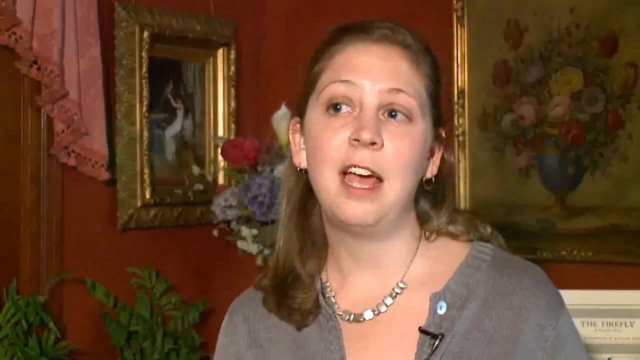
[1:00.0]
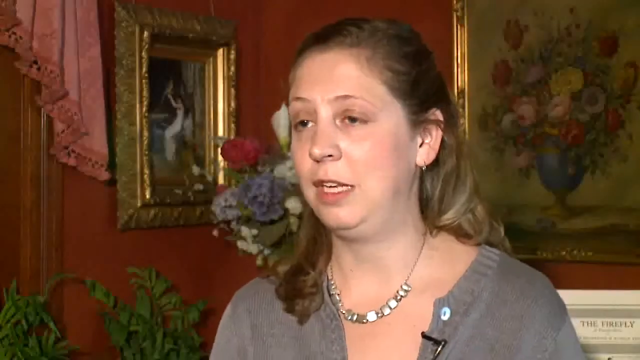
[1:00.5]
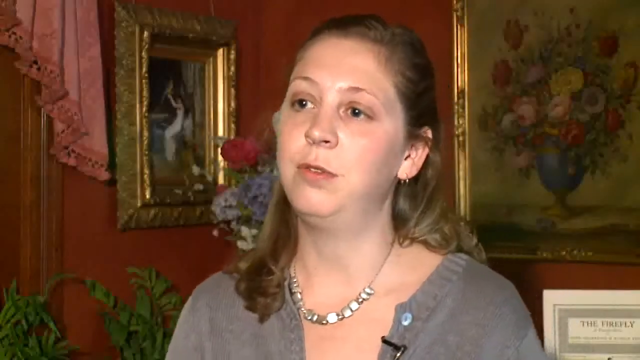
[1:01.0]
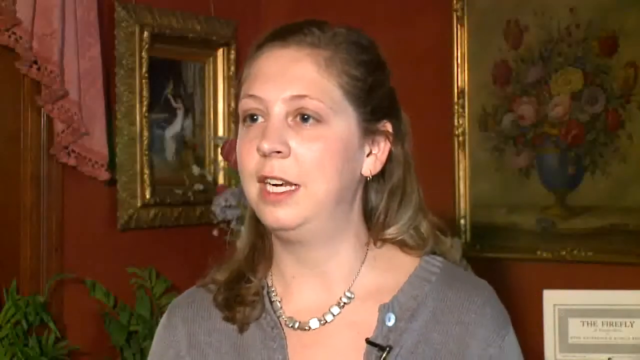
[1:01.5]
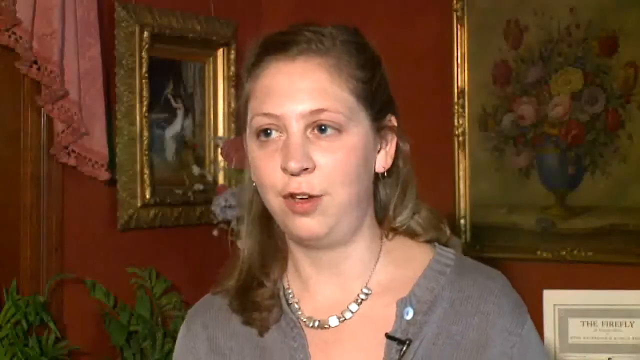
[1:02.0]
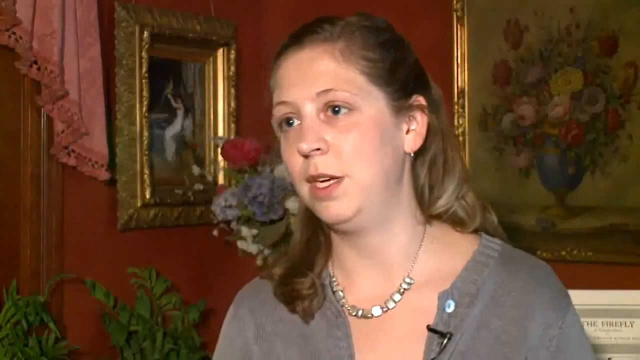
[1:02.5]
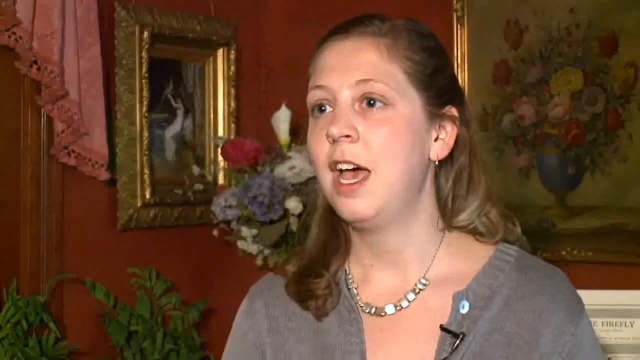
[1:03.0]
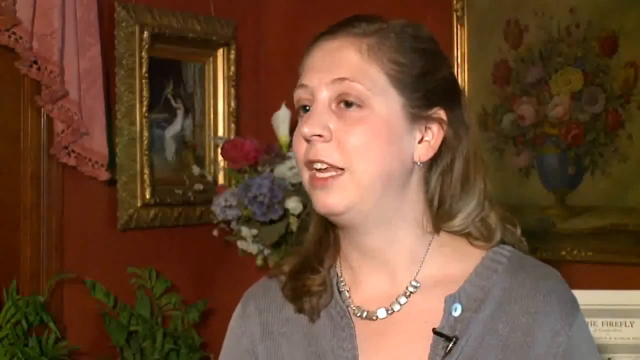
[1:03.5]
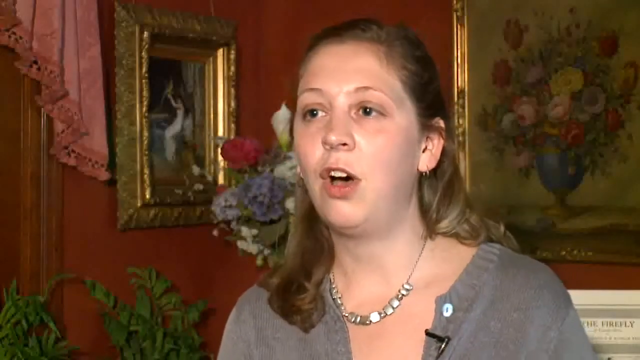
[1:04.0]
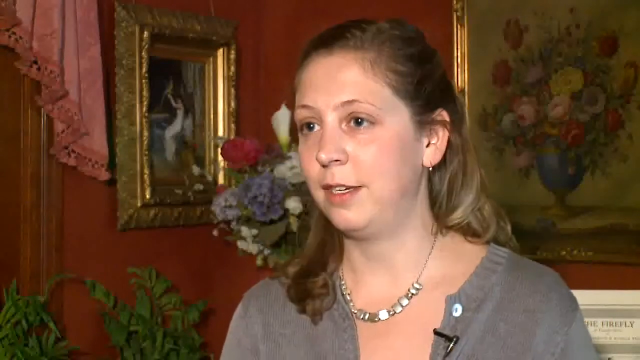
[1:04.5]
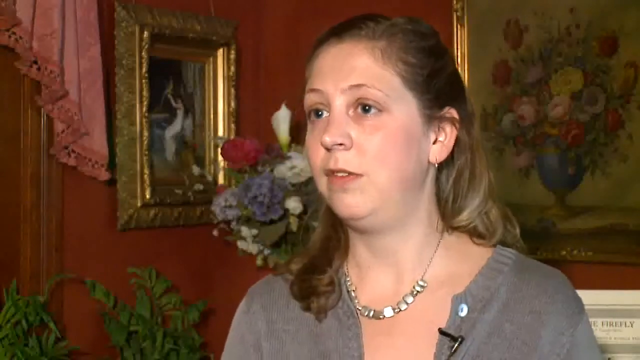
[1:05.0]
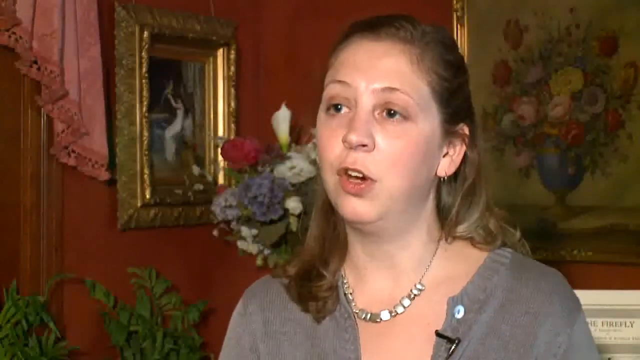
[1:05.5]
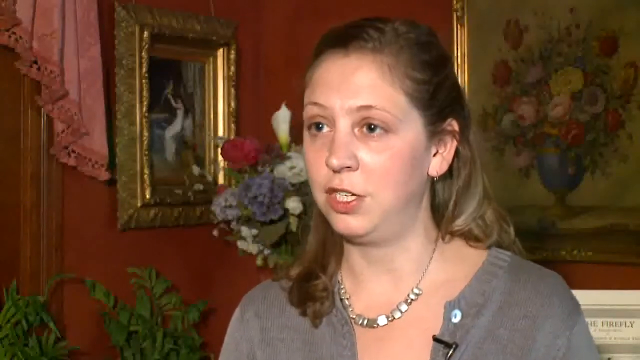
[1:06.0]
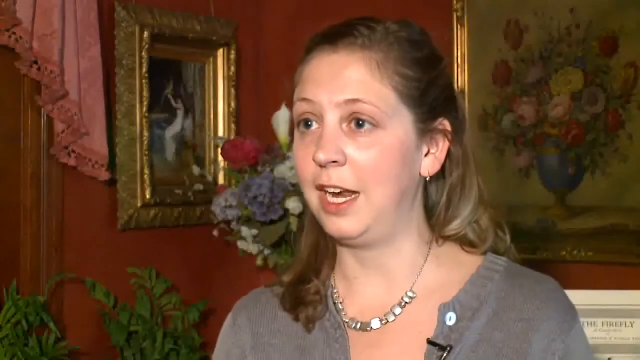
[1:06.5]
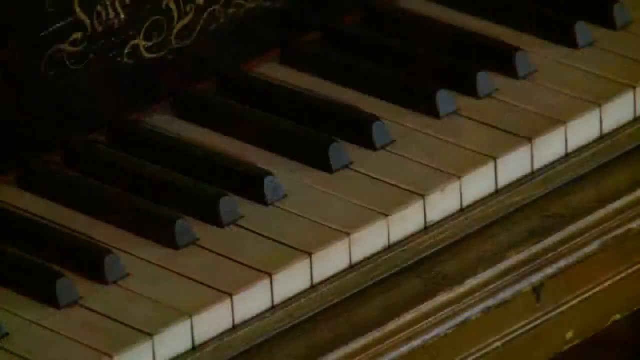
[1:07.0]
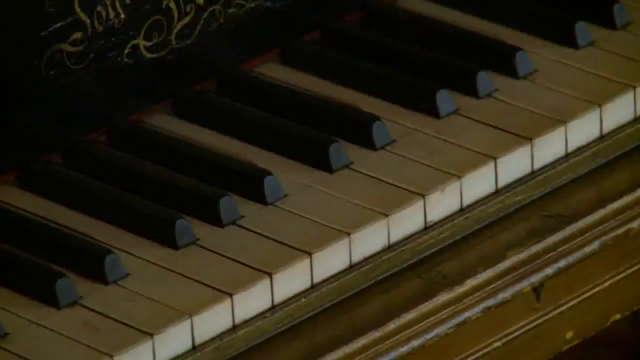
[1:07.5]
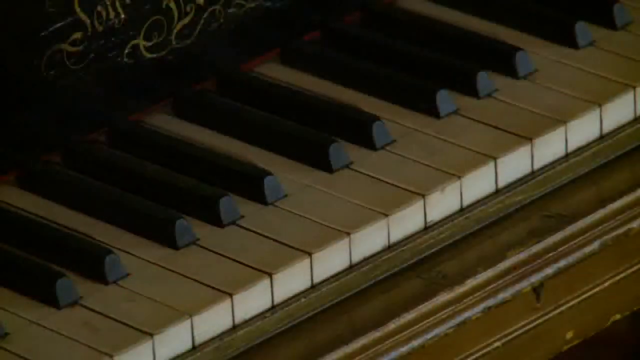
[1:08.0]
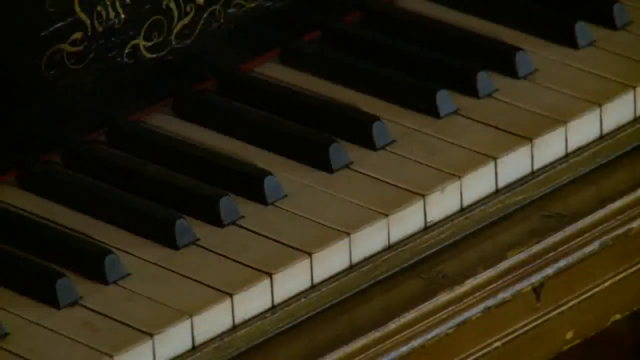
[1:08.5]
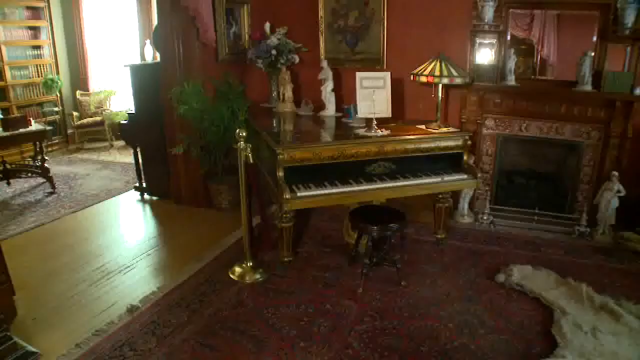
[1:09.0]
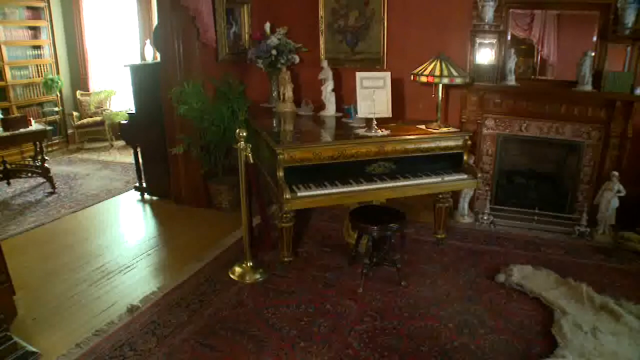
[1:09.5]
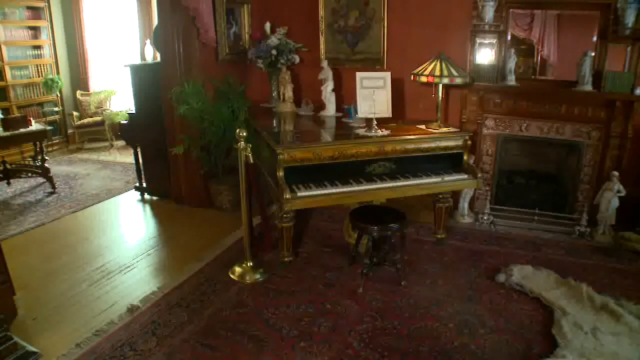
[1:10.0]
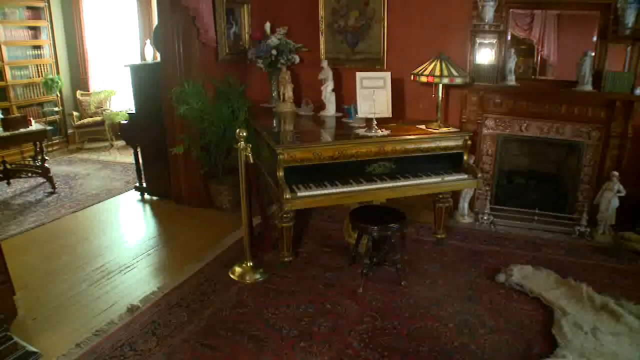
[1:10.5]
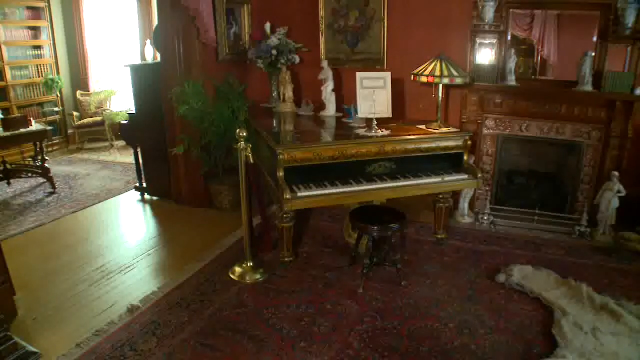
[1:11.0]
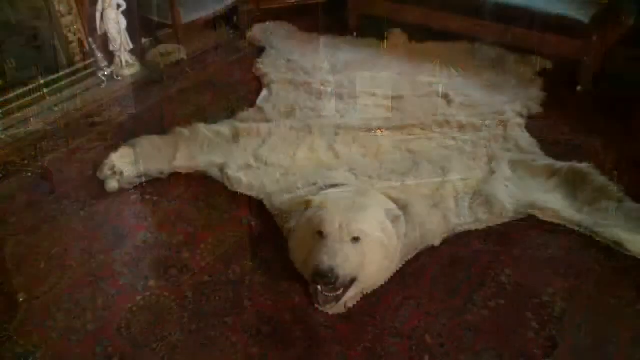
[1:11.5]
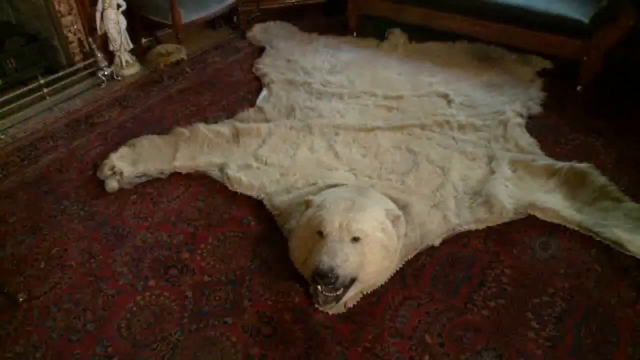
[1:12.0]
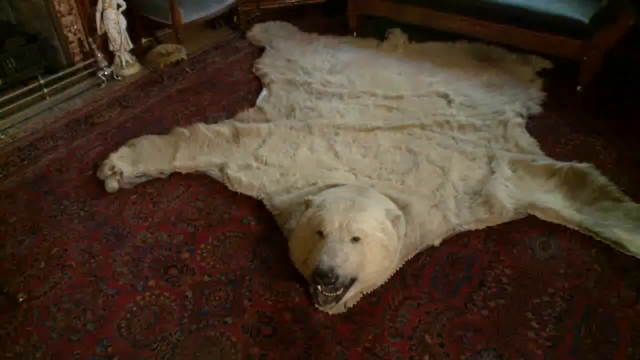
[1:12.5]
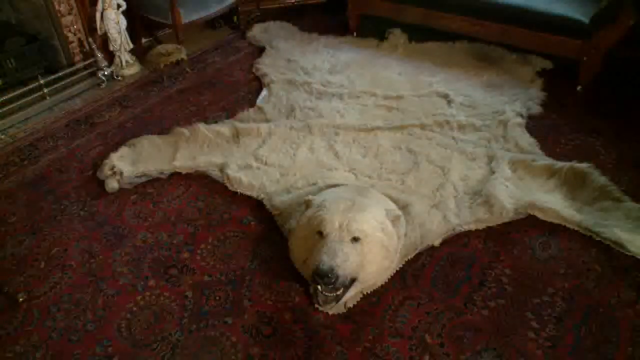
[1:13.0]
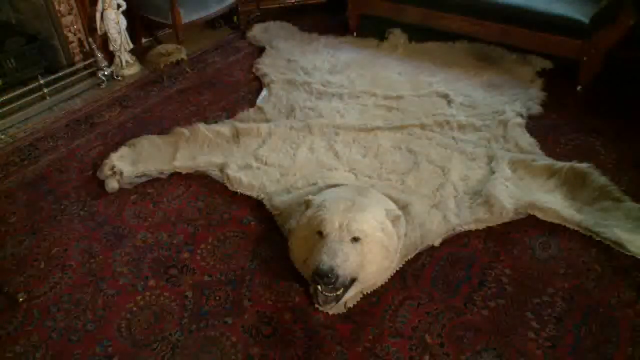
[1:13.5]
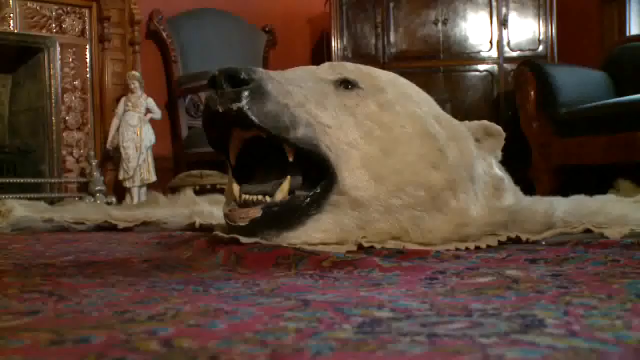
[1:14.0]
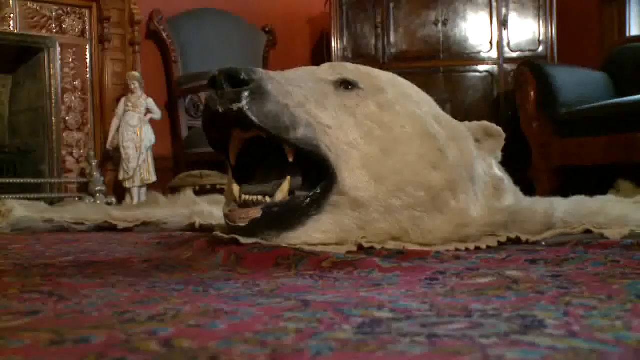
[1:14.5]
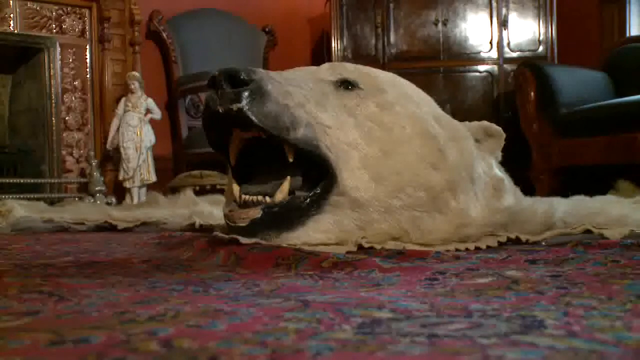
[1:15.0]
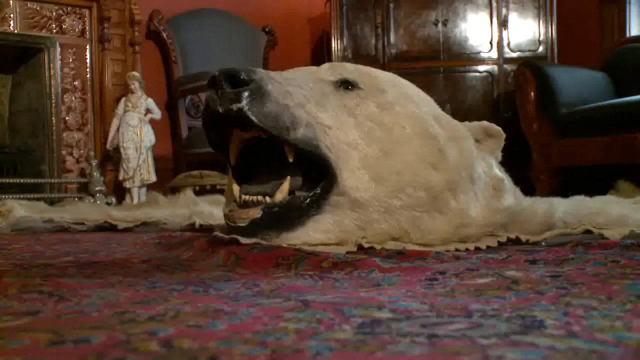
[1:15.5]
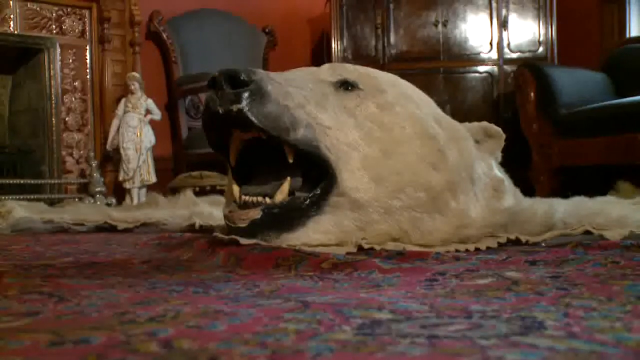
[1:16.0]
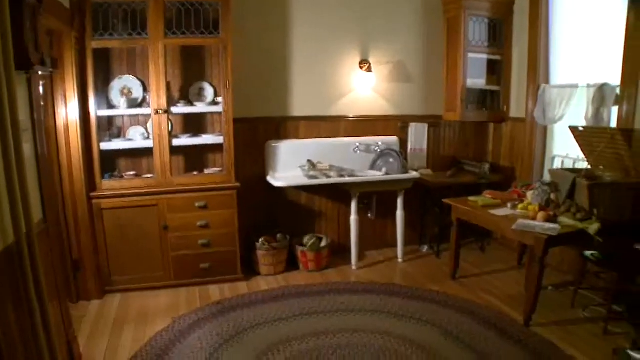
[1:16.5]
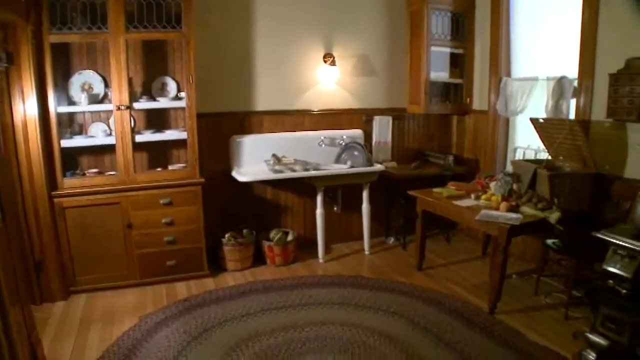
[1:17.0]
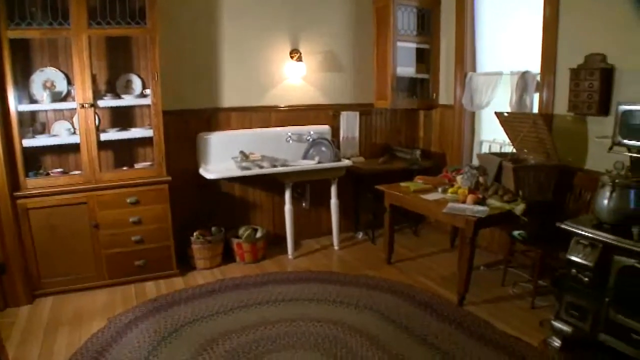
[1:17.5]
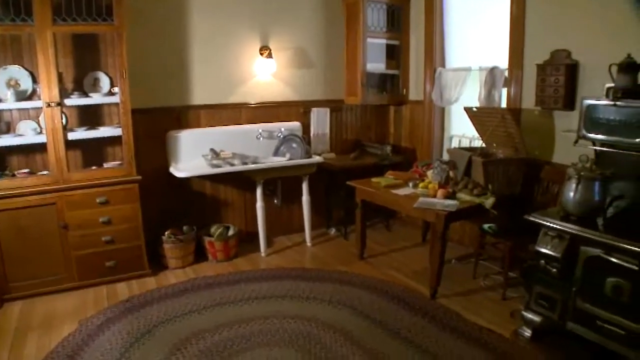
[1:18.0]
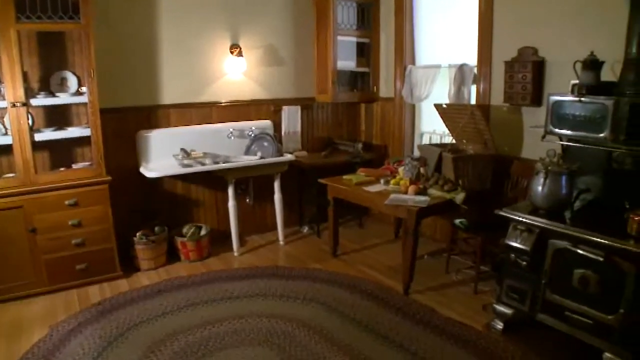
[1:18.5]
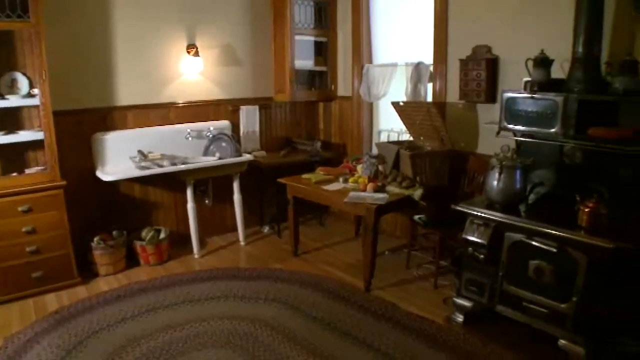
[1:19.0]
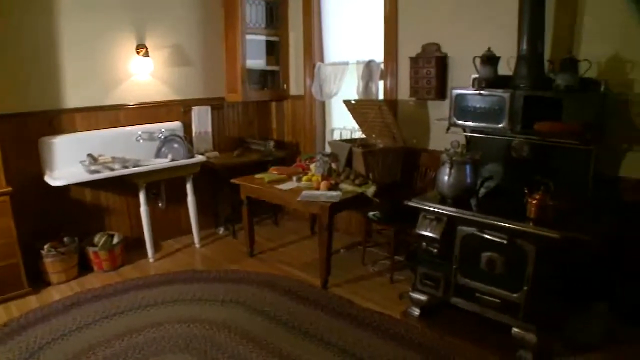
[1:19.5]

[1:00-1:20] The original piano is shown; it is very old but in very good shape. There is a white rug. The kitchen has a cast iron stove, used for cooking and heating water for baths, and a very large old-time white sink. The walls are painted deep red, and there are rugs throughout the home. Most of the pictures are in gold frames. Cabinets hold the original dishes the family used.